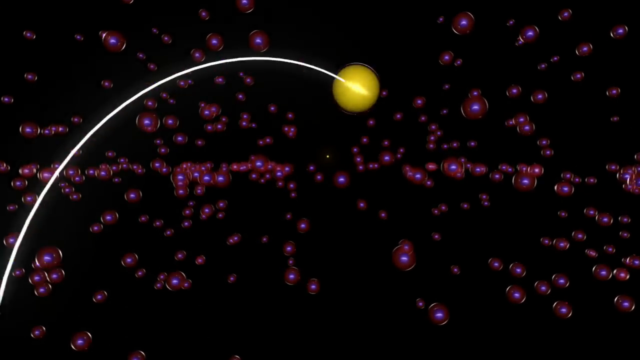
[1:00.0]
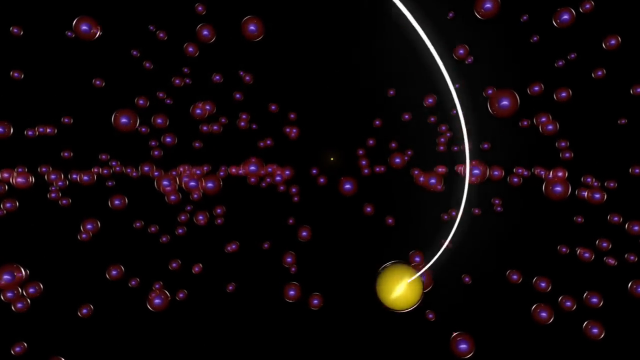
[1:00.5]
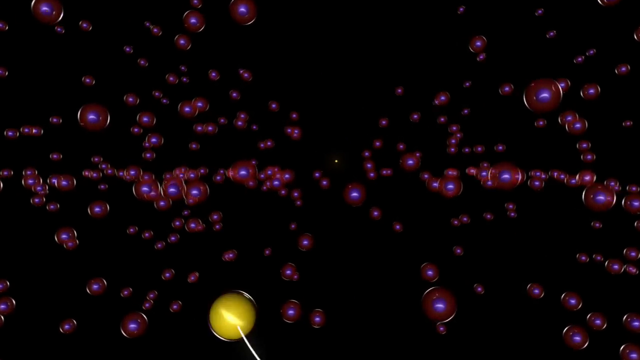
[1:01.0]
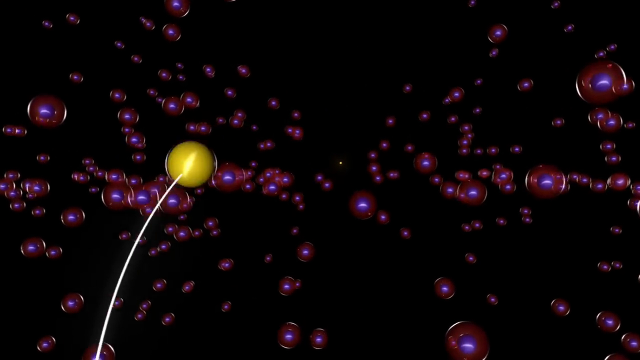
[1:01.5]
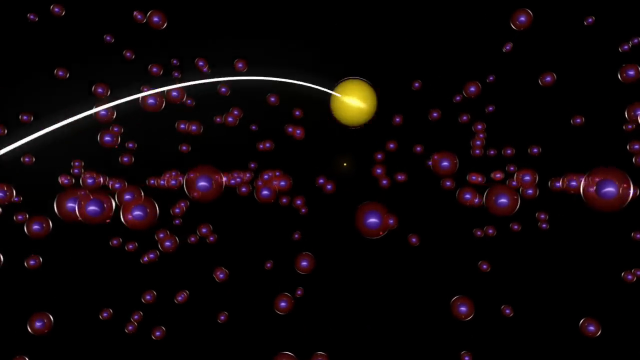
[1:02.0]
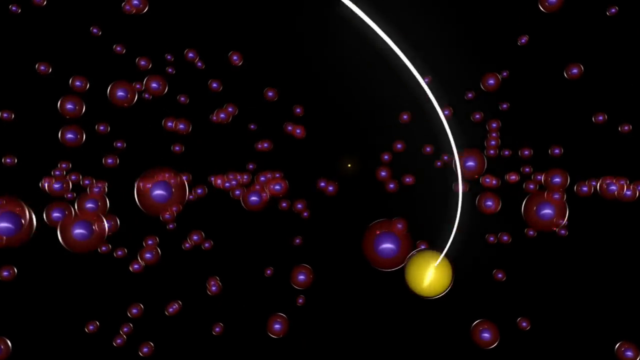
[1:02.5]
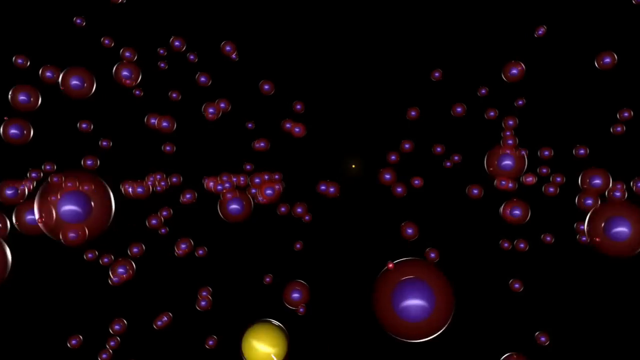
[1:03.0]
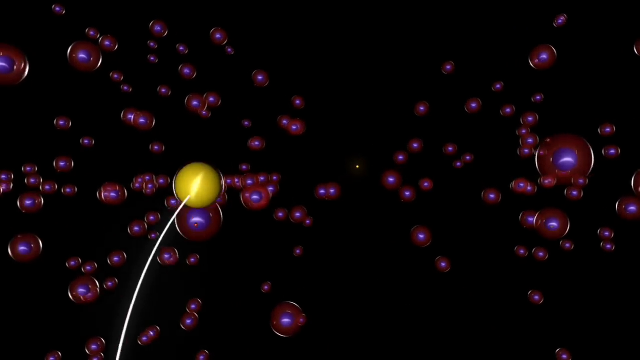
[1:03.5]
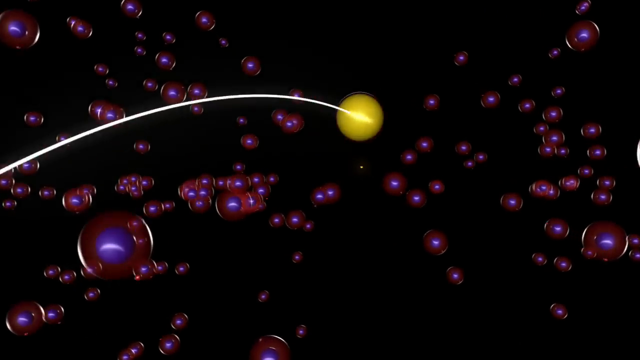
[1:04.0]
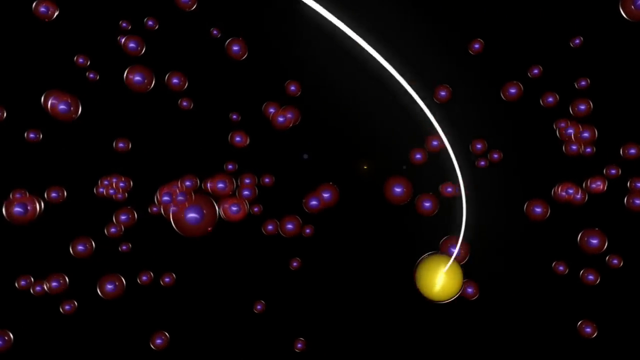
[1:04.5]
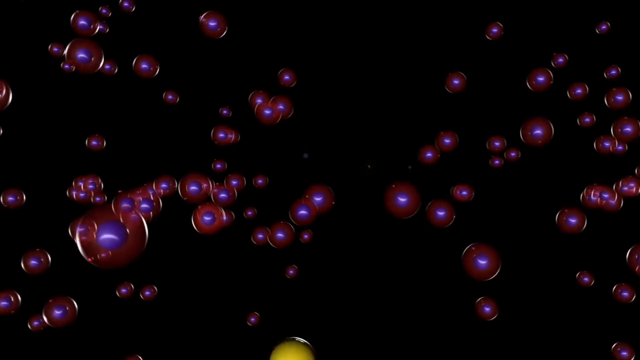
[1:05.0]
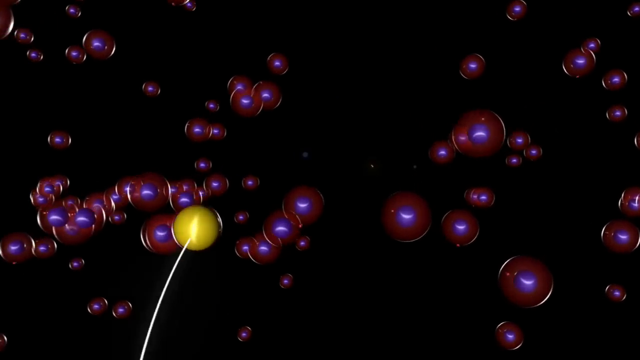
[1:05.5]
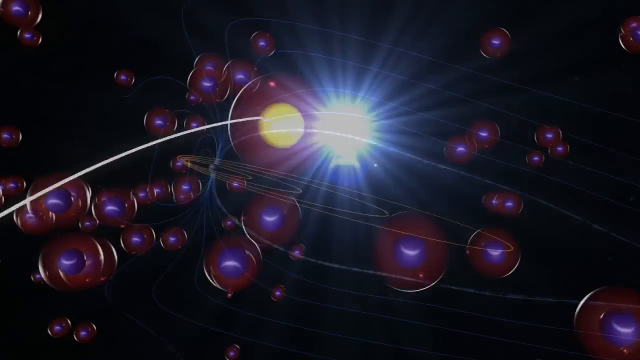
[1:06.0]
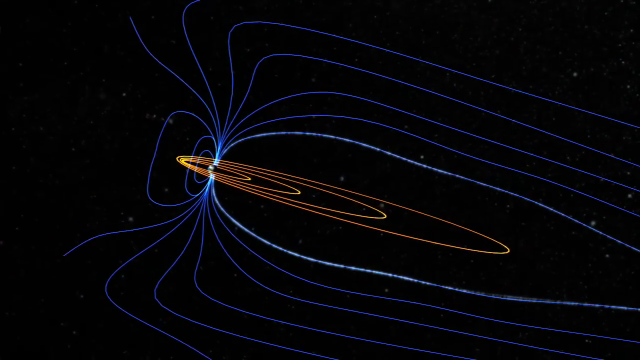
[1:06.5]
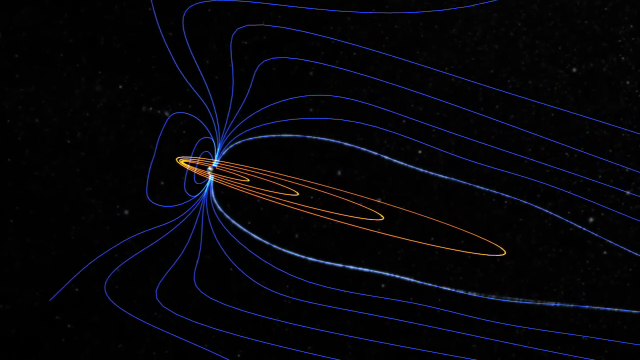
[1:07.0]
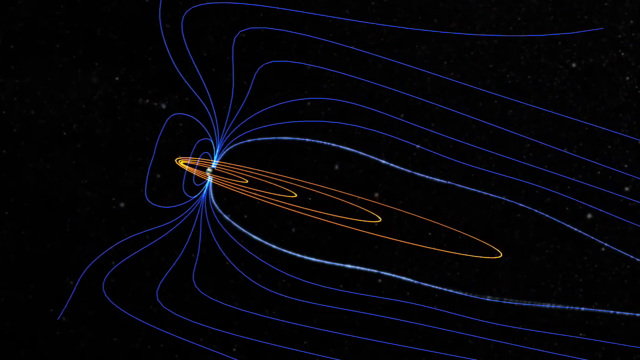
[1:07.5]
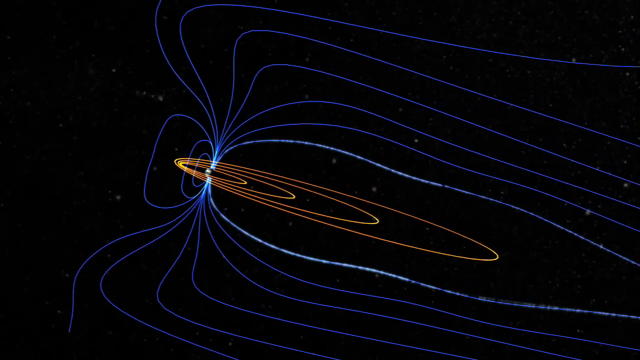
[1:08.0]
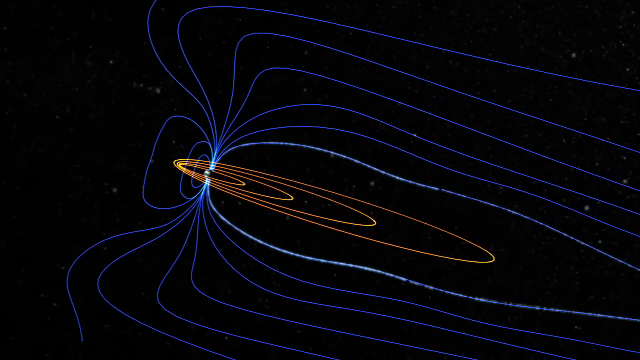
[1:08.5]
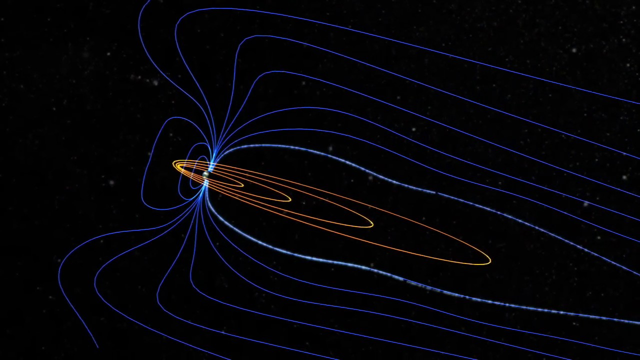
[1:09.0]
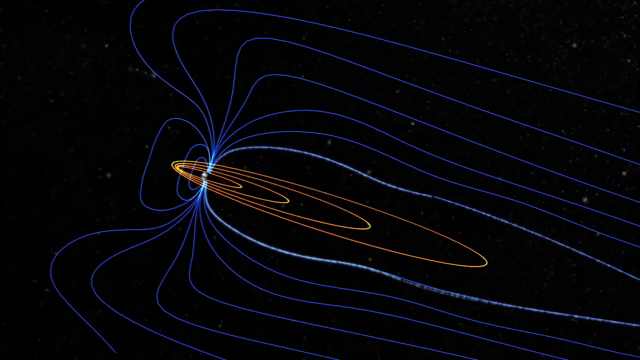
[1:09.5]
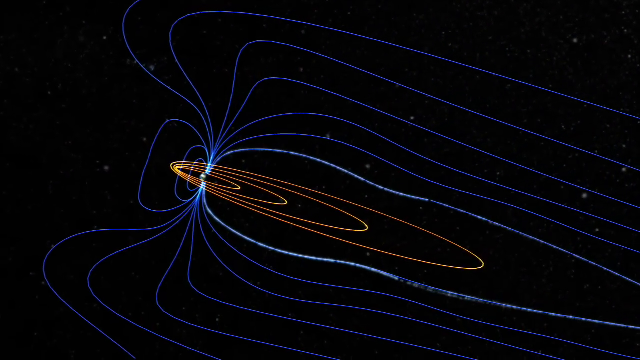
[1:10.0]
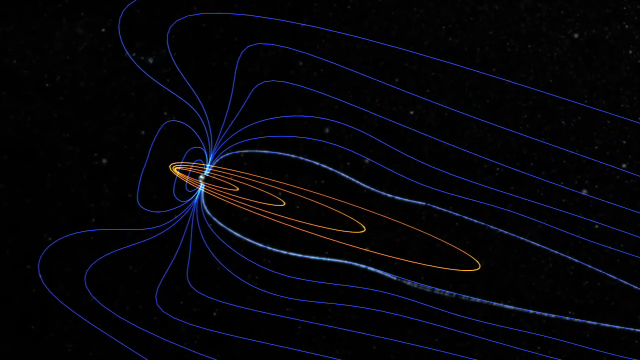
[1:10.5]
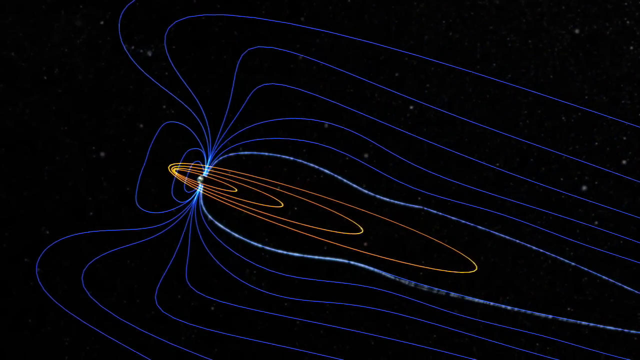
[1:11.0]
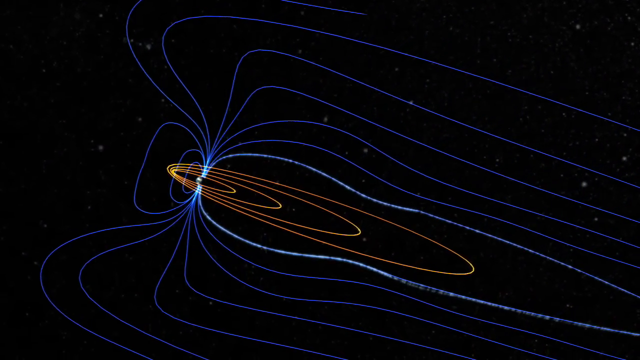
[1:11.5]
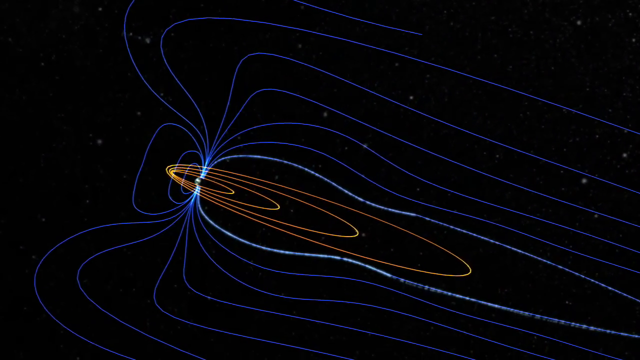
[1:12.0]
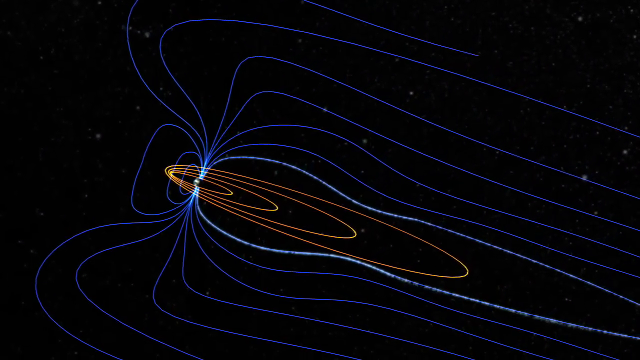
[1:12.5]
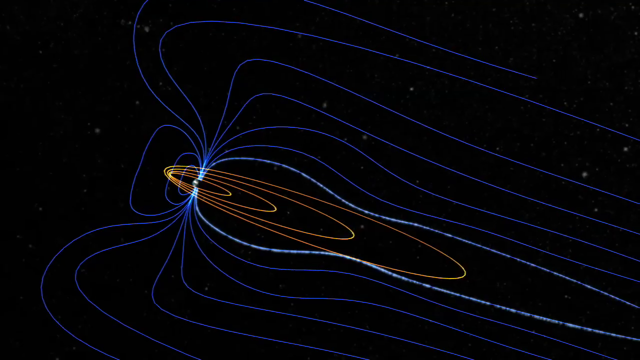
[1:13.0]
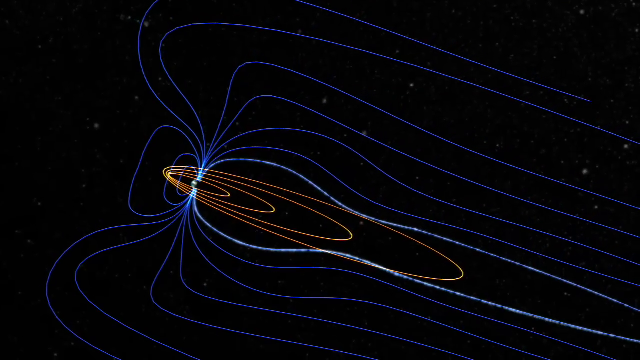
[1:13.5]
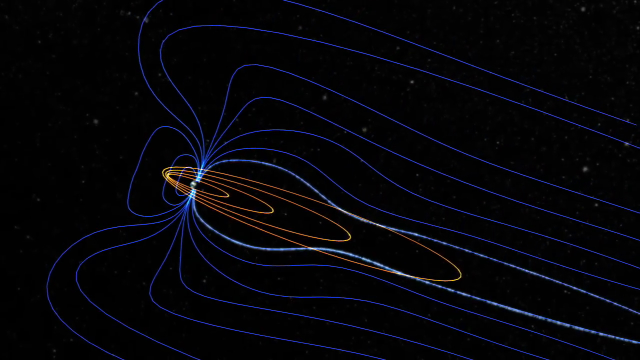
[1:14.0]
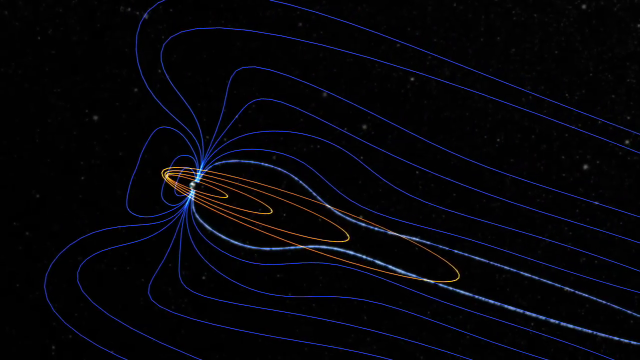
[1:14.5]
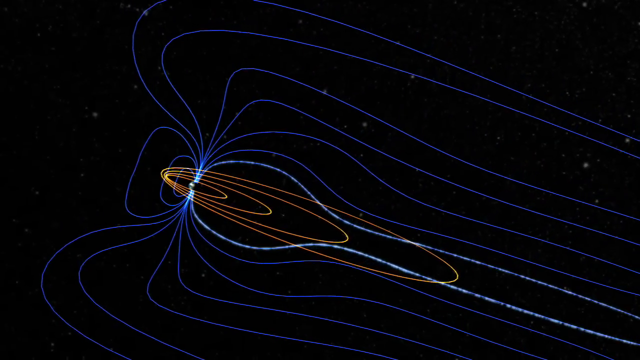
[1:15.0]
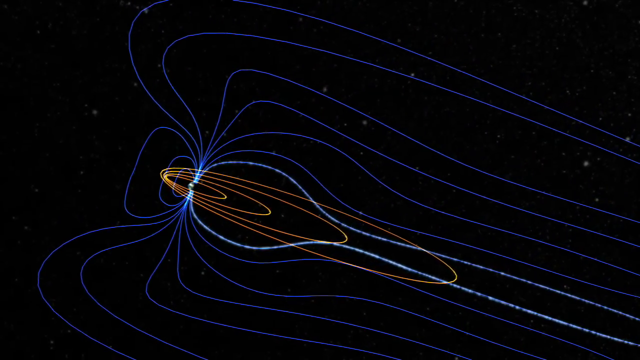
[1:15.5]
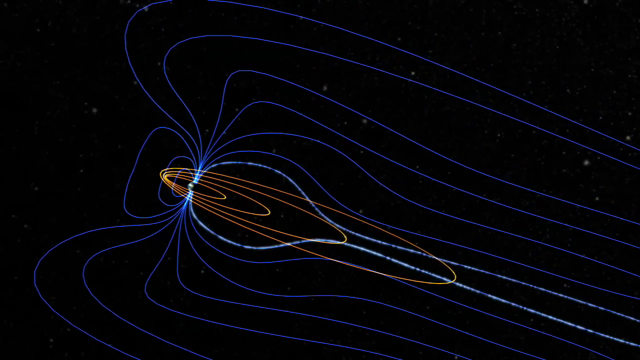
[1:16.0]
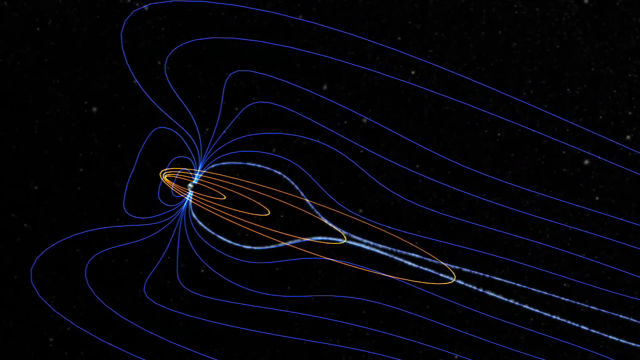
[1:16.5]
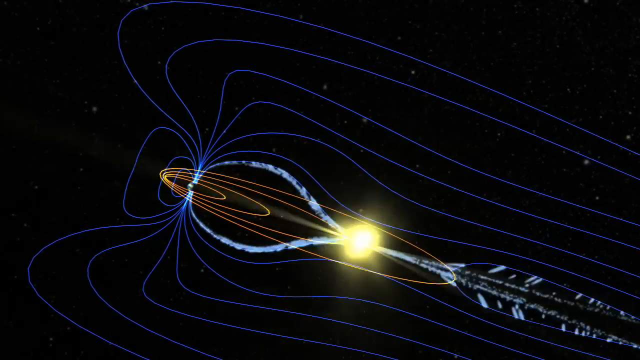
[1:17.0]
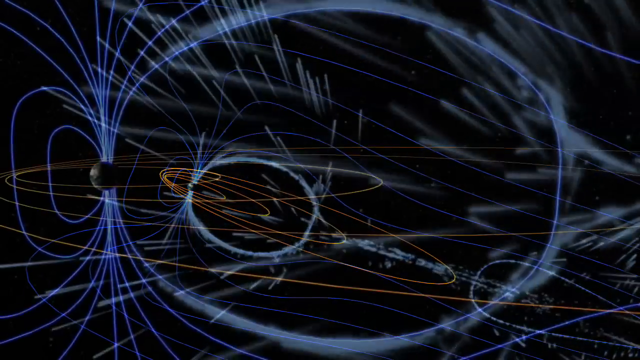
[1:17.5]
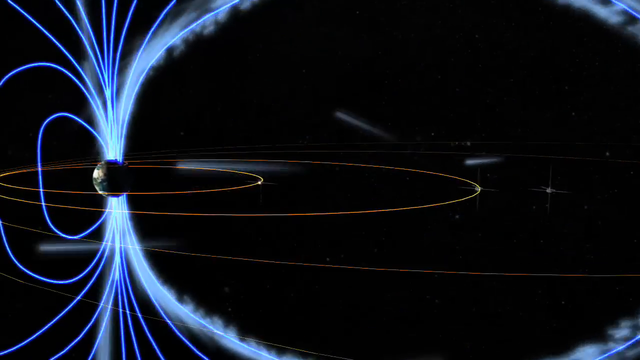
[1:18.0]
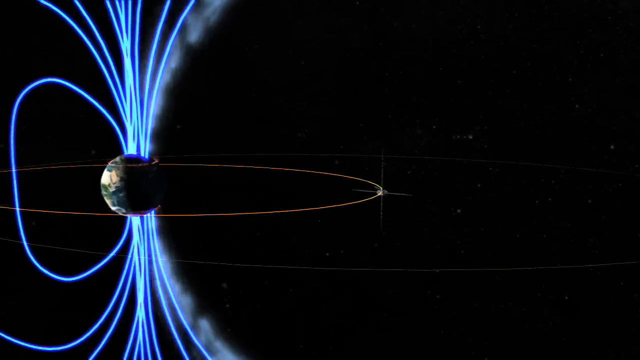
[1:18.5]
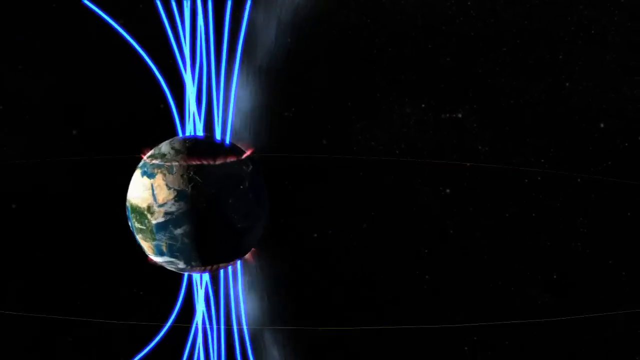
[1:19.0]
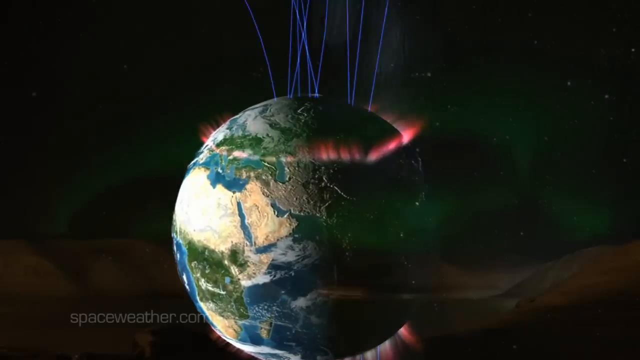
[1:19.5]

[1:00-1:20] A graphic shows a yellow circle going round and round the screen. It switches to a different graphic with vectors going around the circle, possibly showing the orbit of the yellow circle. The screen then zooms in to a representation of planet Earth from space, with a ring of red light around the top third of the globe and approximately ten blue lines coming out from the top of the globe. A yellow ball that looks like a tennis ball goes round in a circular shape while purple bubbles with blue centres come out of the screen toward the viewer; the ball sometimes hits these bubbles, producing a small explosion of light. Blue and orange lines represent the way these objects move through space, producing patterns in the sky from their orbits, and small flashes of light come out from the screen.